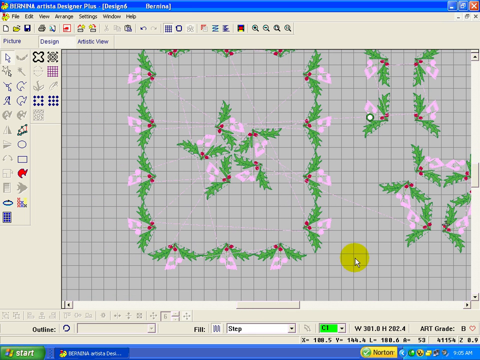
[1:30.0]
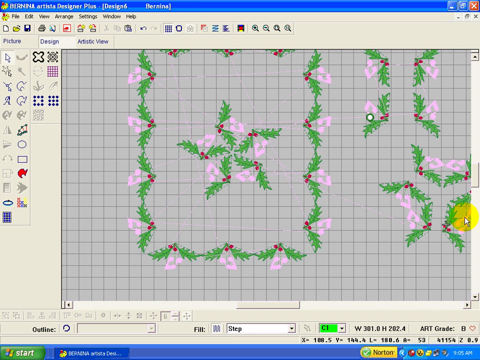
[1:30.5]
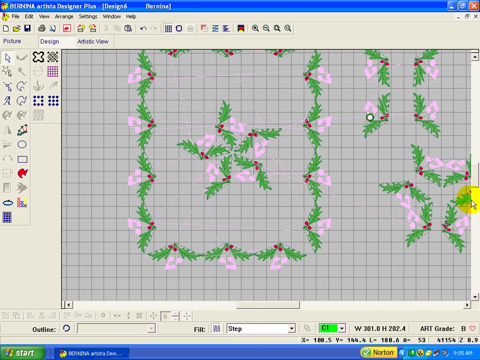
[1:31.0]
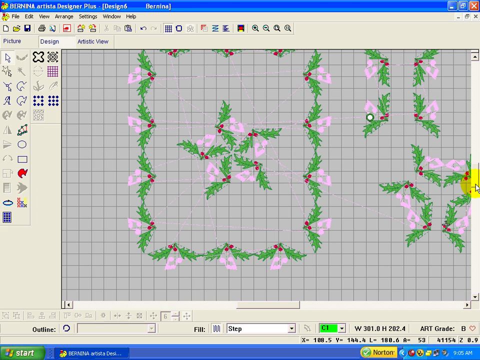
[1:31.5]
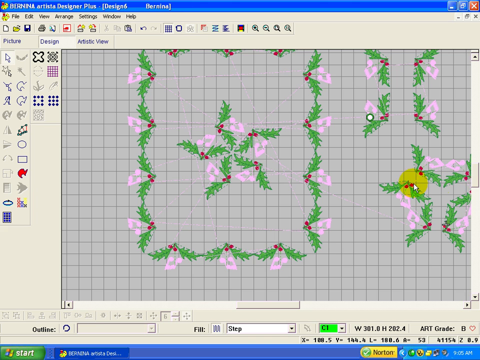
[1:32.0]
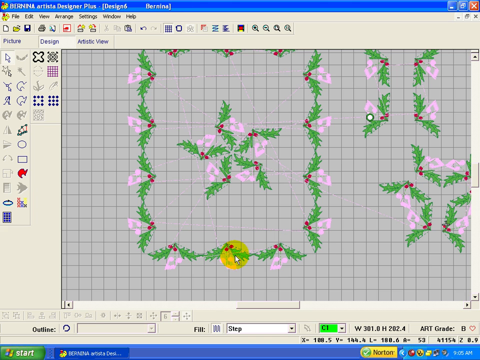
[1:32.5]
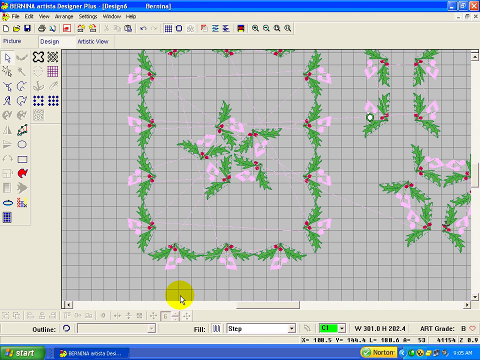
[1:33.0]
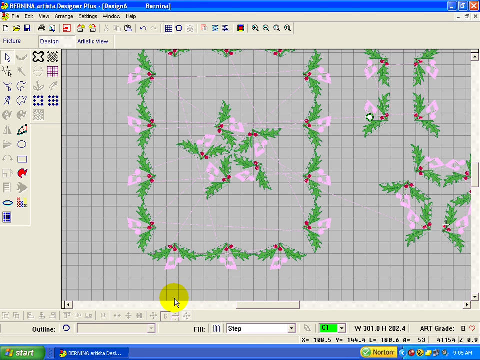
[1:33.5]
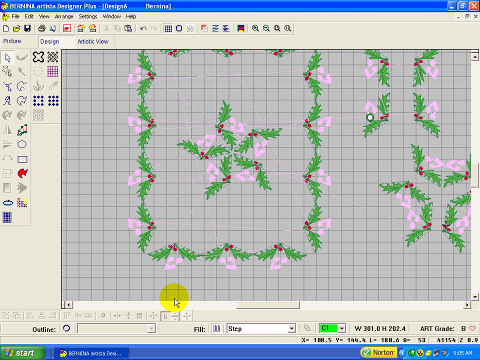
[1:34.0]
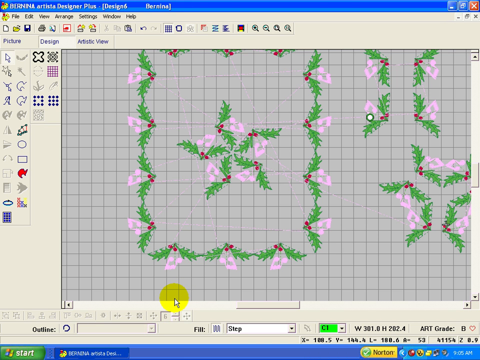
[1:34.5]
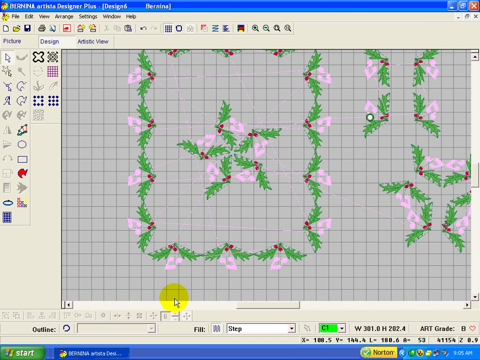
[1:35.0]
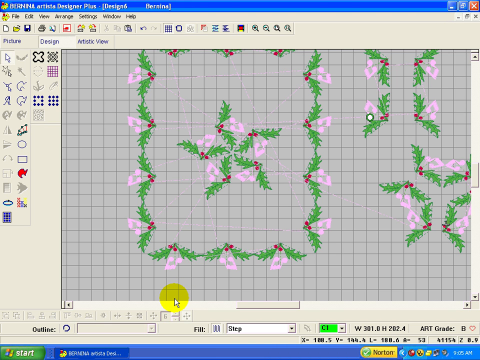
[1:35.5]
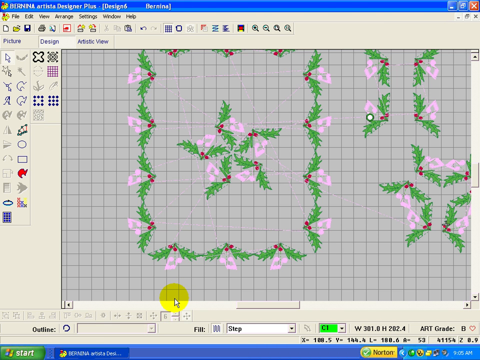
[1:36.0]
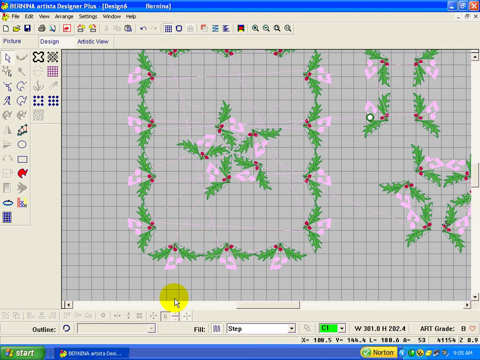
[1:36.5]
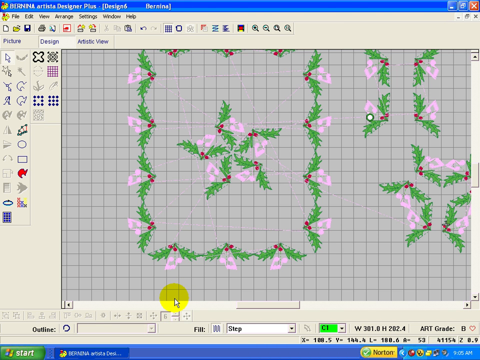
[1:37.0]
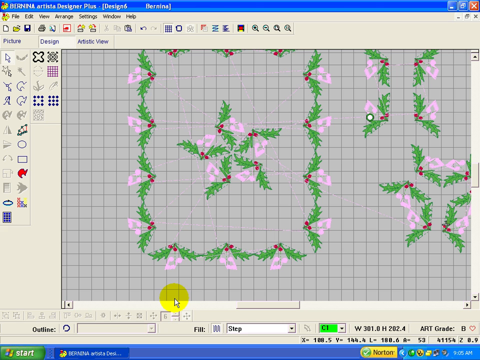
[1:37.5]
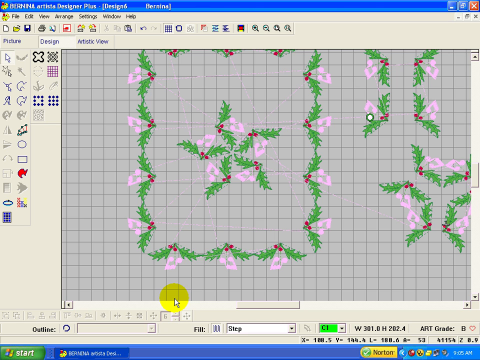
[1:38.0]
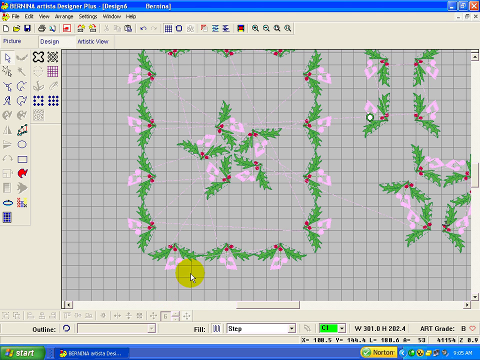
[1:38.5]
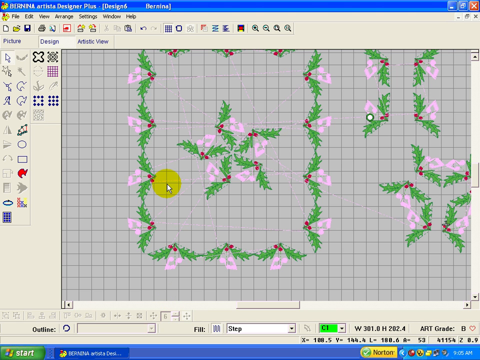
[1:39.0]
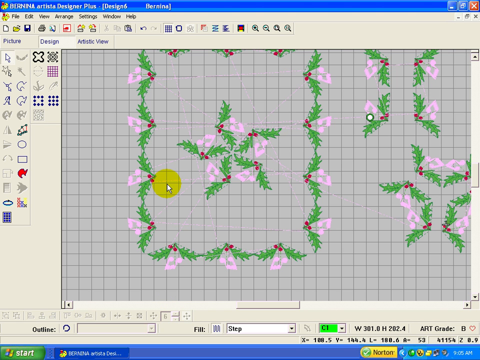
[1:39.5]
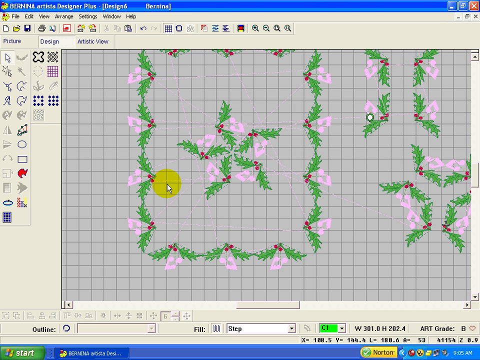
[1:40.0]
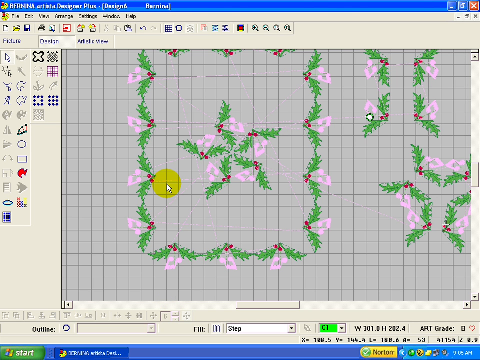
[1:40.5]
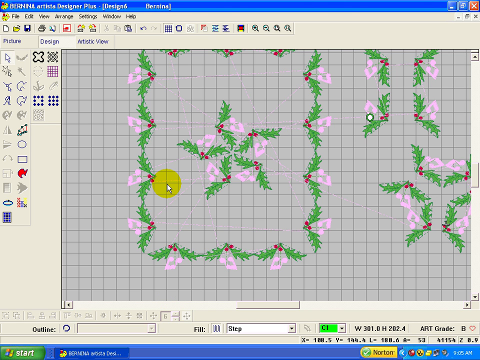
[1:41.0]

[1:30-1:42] The red berry and green leaf decorations on the original graph are now easier to see, and they are arranged in different patterns. On the left is a giant box made of the decorations, and in its center more of the elements are angled to form a rough star shape. To the right of the box are four elements that run parallel, going vertically. Below those, six elements are angled into a Y shape. The mouse cursor hovers over the Y shape, moves to the very bottom left, and then slowly moves up.